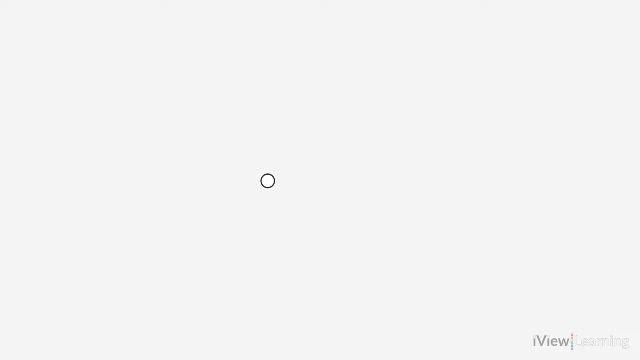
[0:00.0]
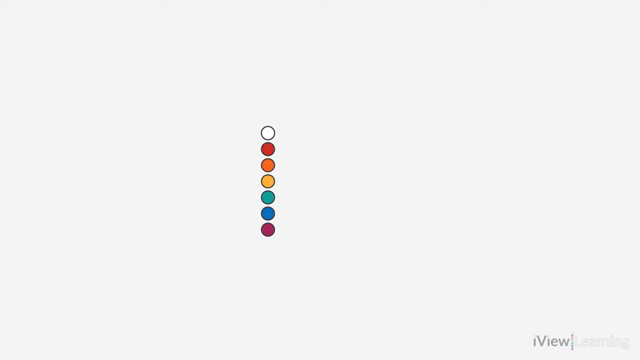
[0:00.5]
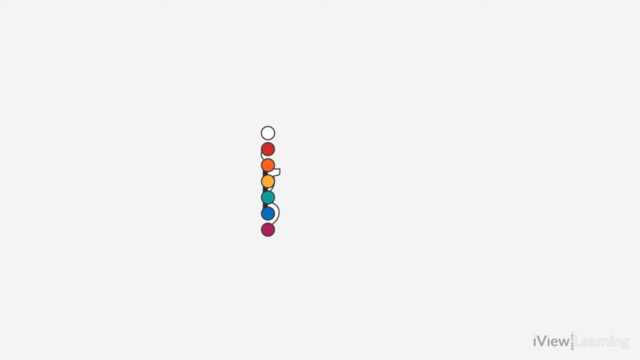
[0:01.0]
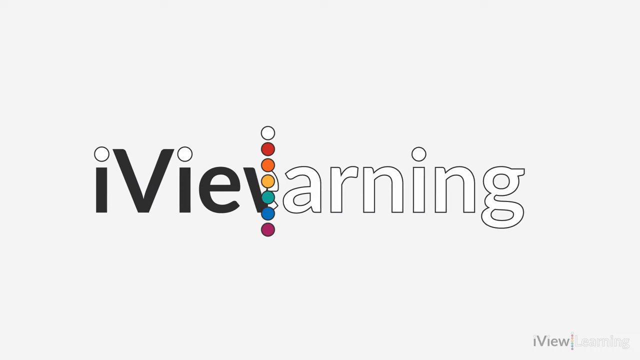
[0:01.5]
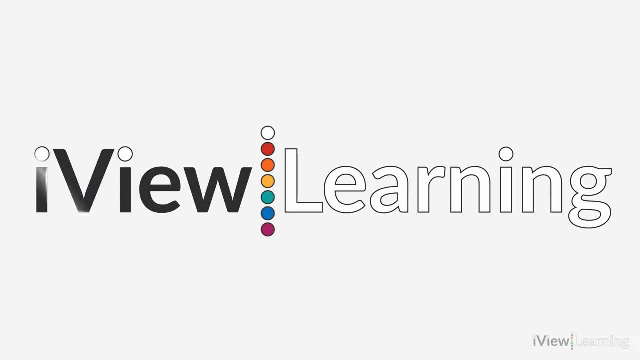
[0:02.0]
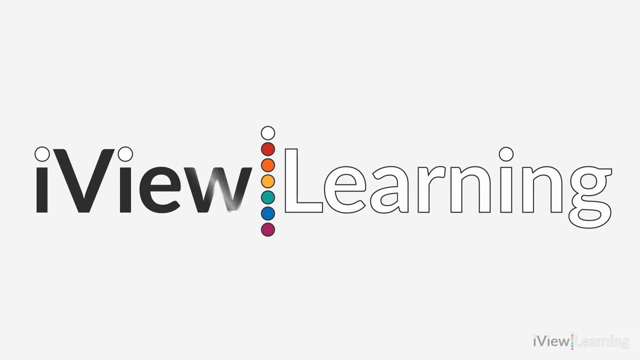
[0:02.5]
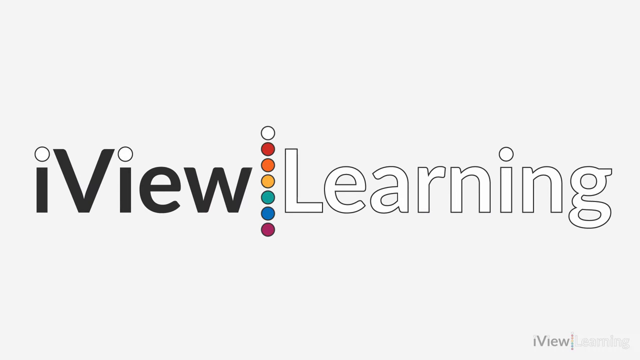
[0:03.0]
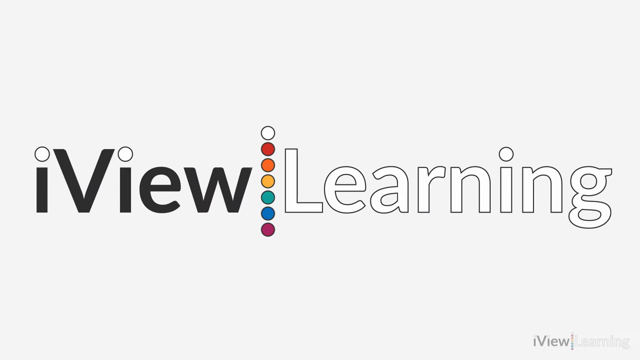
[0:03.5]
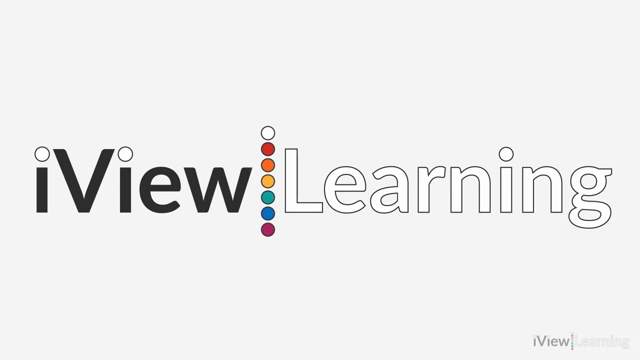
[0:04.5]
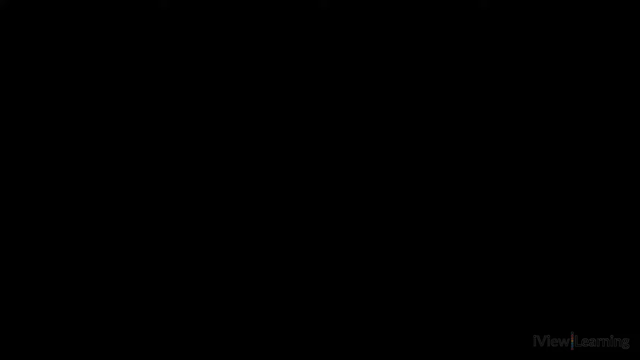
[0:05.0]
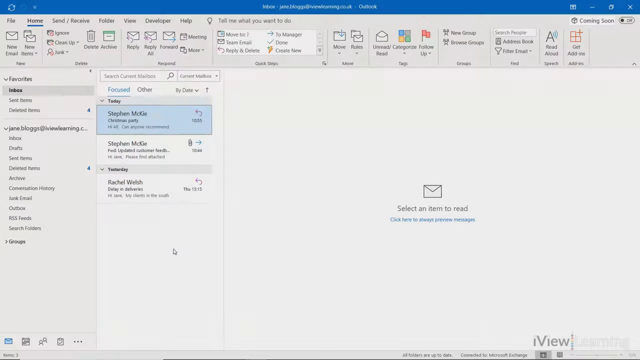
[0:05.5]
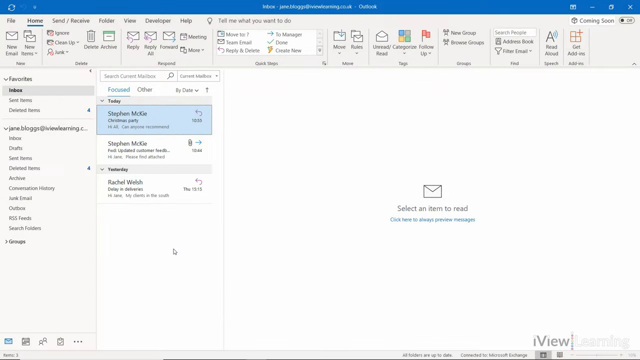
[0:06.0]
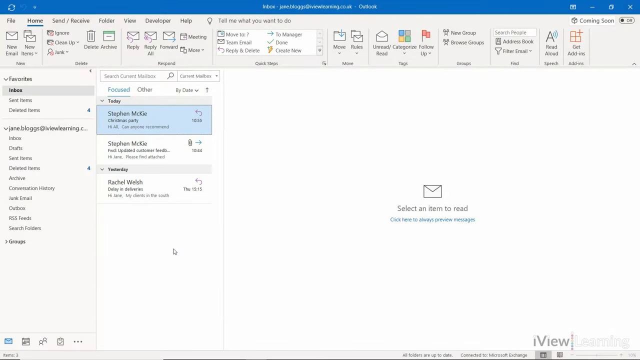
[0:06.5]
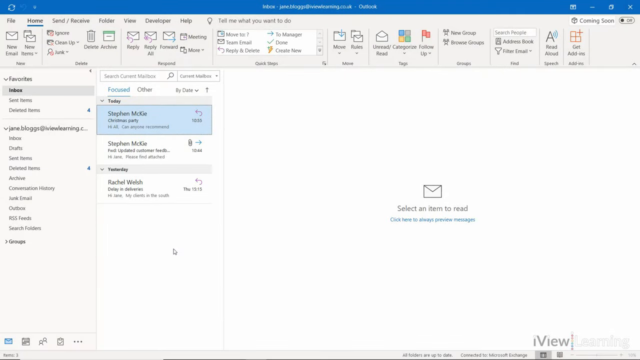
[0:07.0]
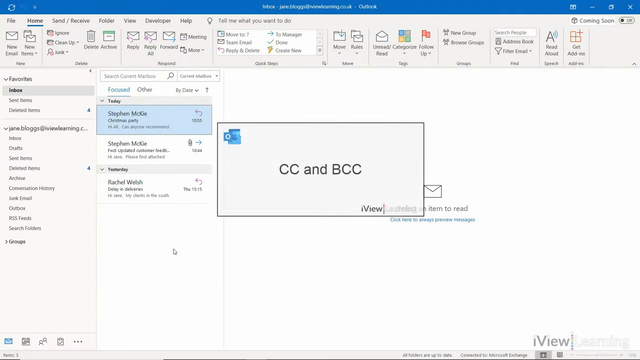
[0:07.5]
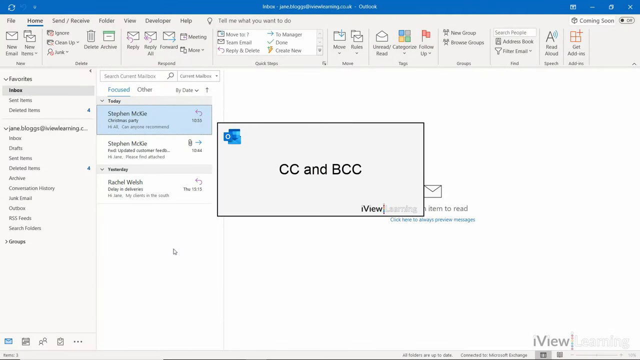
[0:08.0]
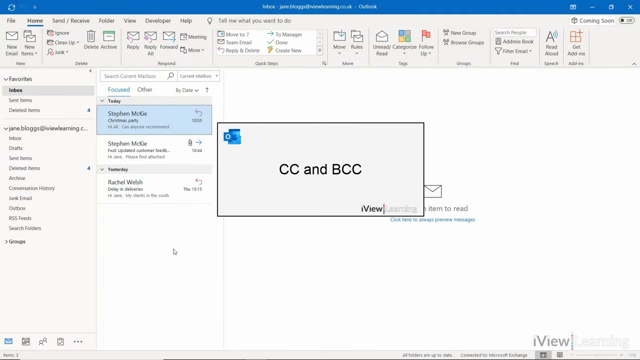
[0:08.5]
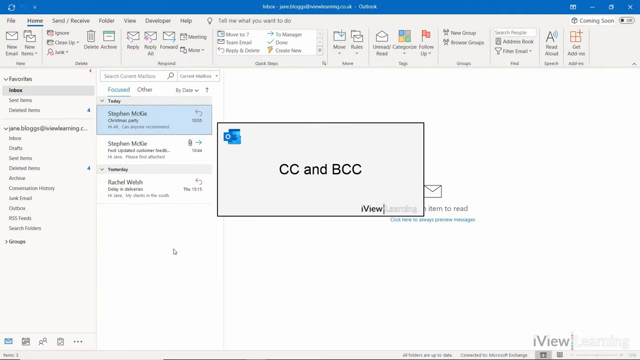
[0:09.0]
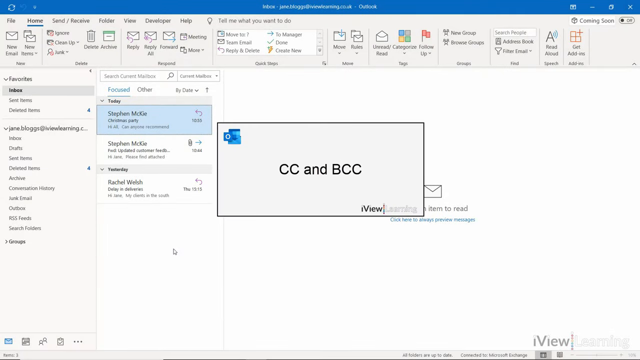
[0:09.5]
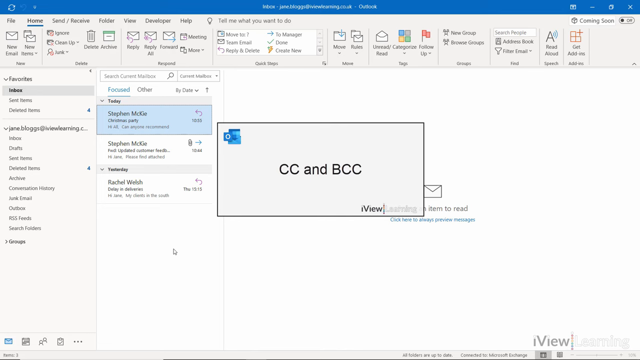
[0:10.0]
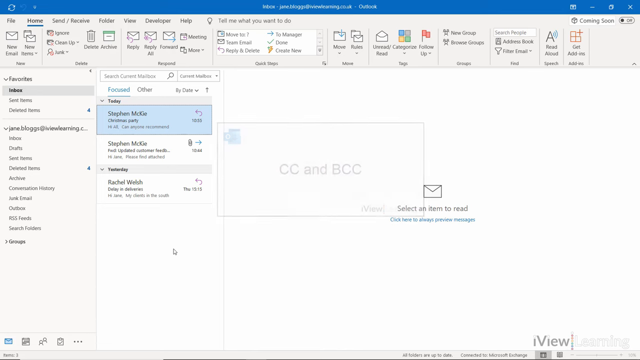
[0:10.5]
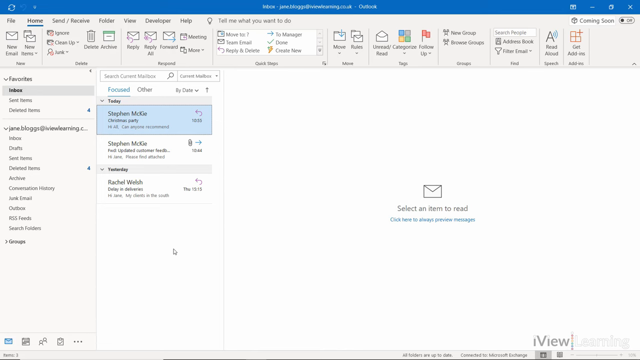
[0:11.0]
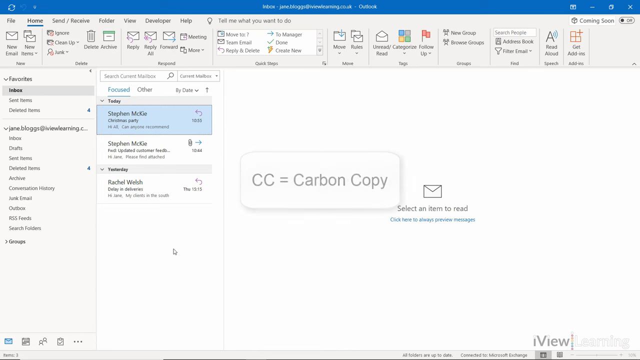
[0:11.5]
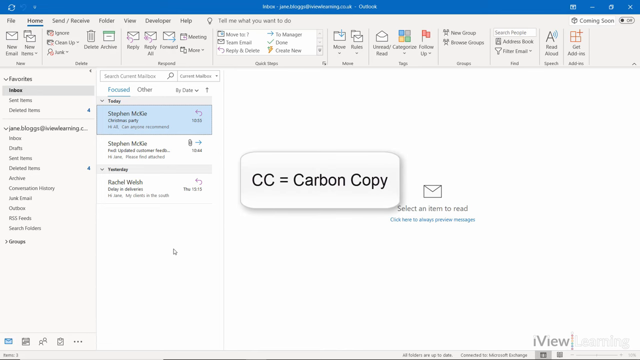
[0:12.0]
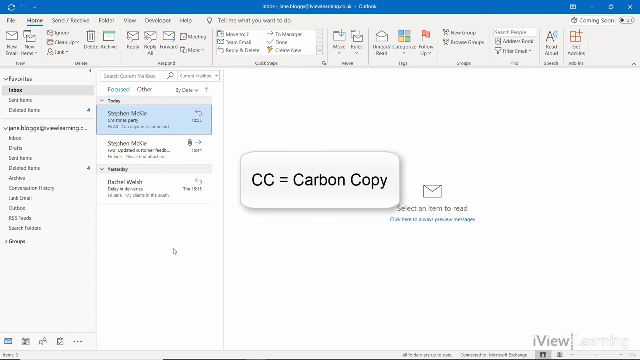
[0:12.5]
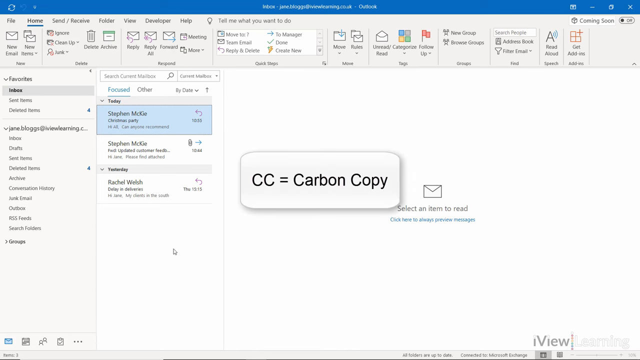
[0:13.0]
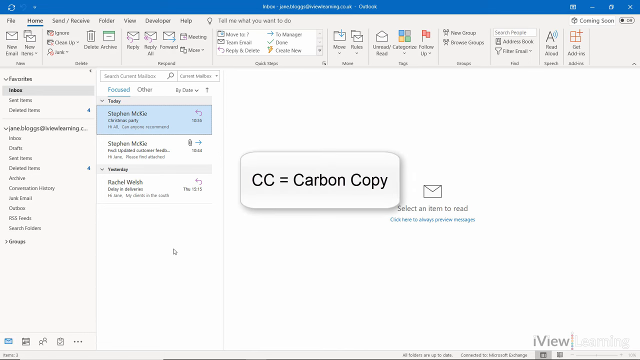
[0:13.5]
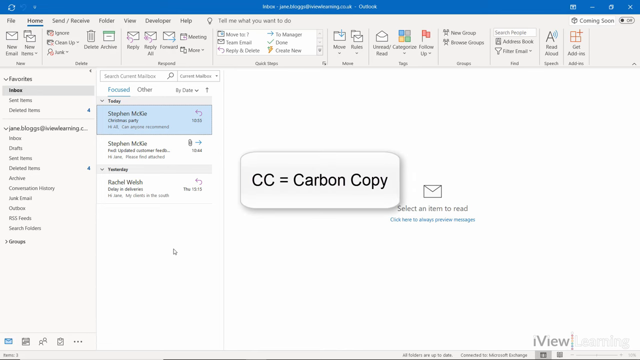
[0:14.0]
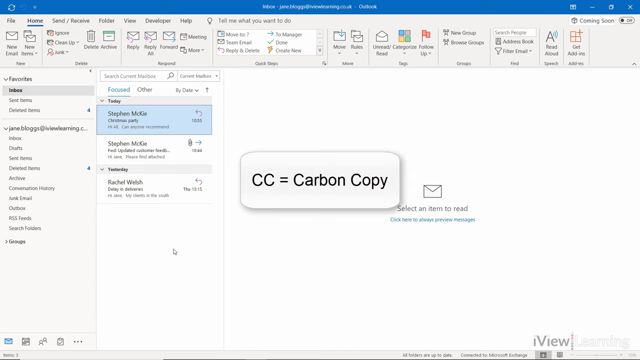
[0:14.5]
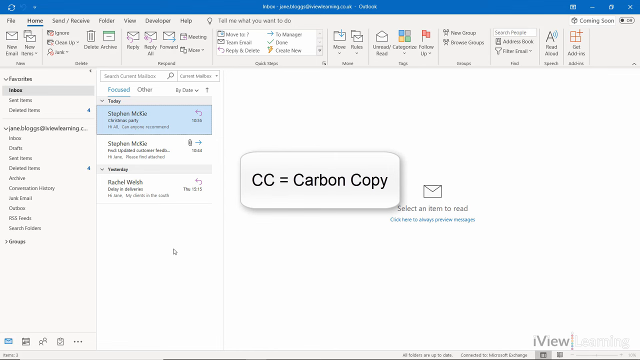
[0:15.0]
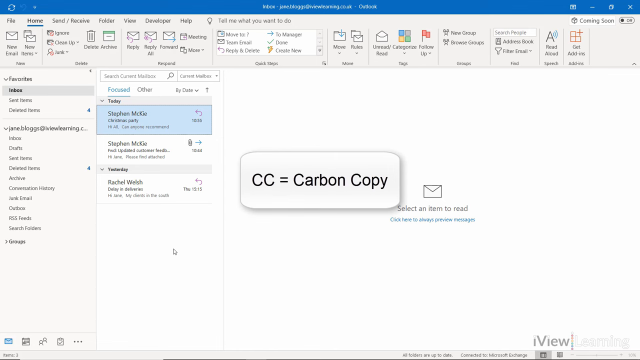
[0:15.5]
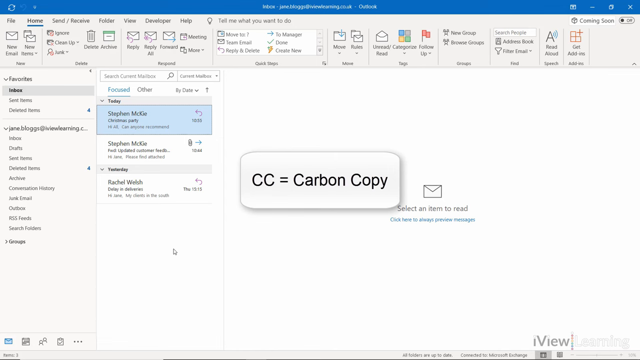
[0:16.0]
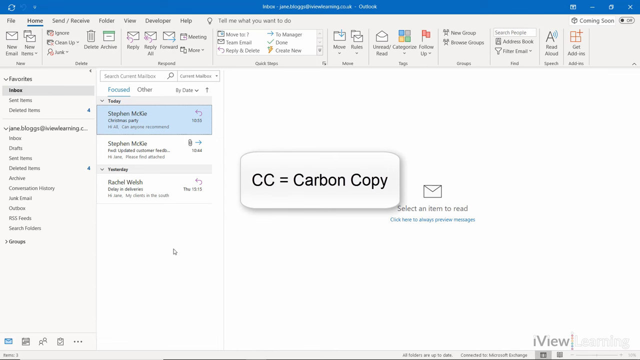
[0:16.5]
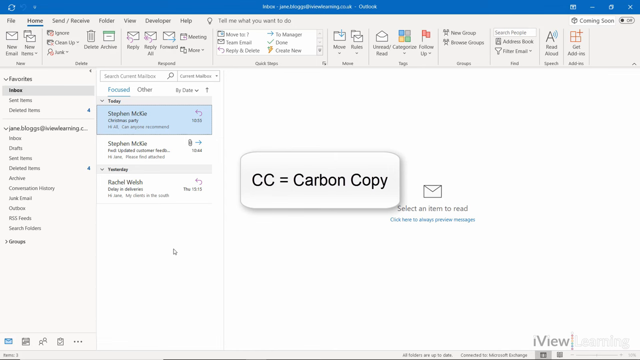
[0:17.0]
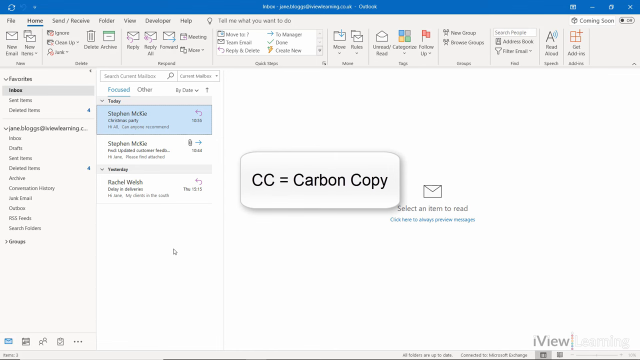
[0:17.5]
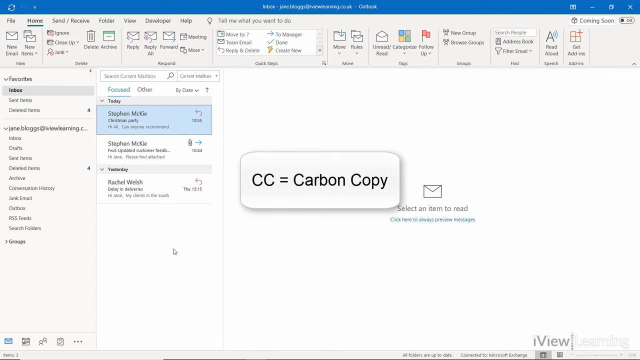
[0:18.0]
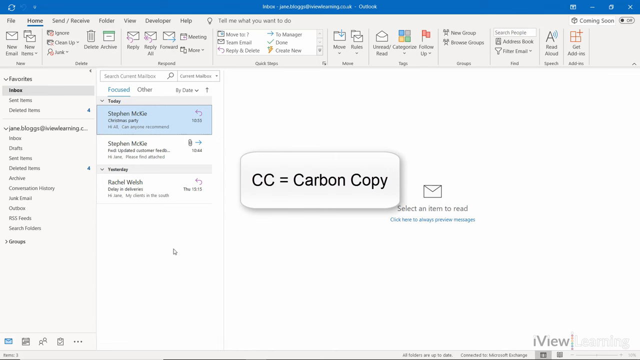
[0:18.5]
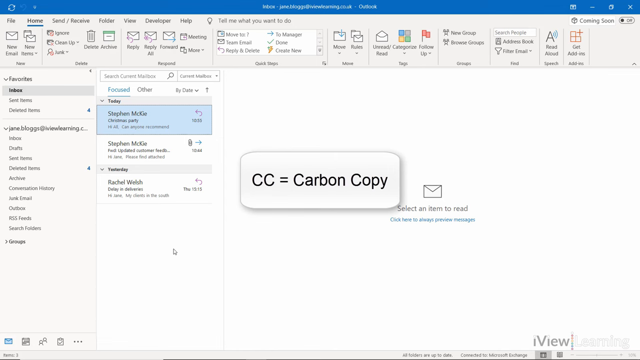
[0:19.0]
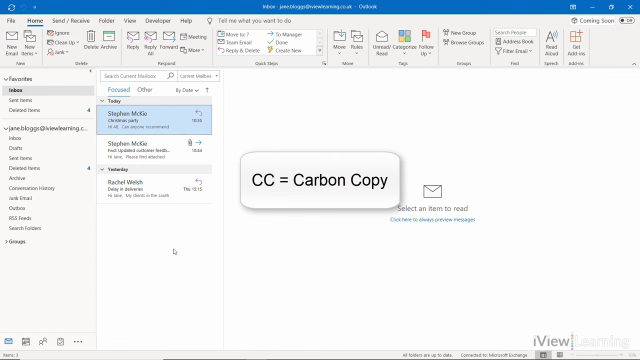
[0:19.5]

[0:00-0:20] Many colored dots overlay a white background in a top-to-bottom format in the center of the screen, and then text moves to the left and right out of this central icon, reading "iViewLearning"; this seems to be the logo animation for iViewLearning, the creator of the video. A background from an Outlook screen recording then appears, showing three emails and the Outlook application. A title appears in a rectangular text box with the Outlook logo in its top left corner, reading "CC and BCC". The title fades away, and a new white text box with rounded corners reads "CC equals carbon copy" in black font. This text box stays in the exact center of the screen, with an iViewLearning watermark in the bottom right corner and the Outlook application visible in the background.